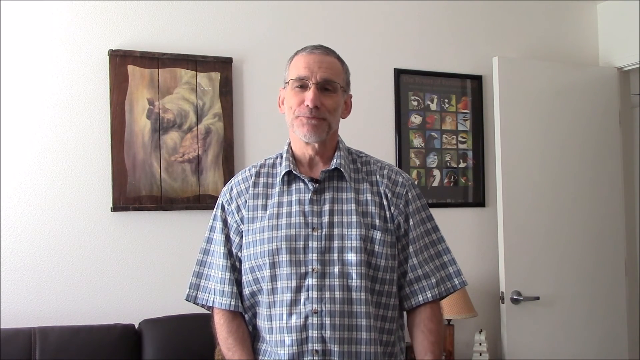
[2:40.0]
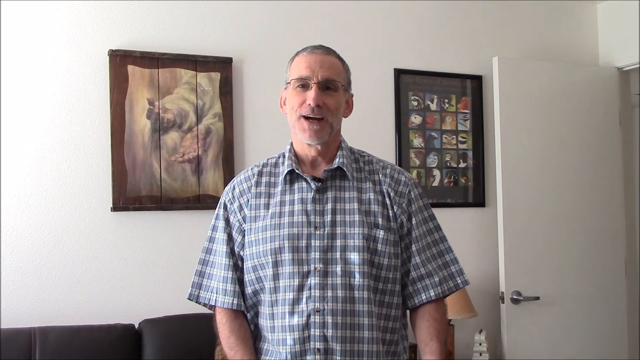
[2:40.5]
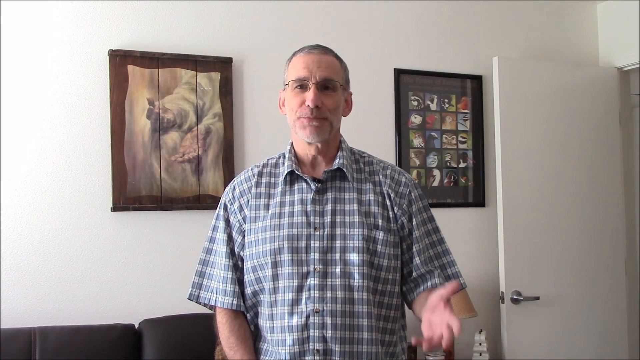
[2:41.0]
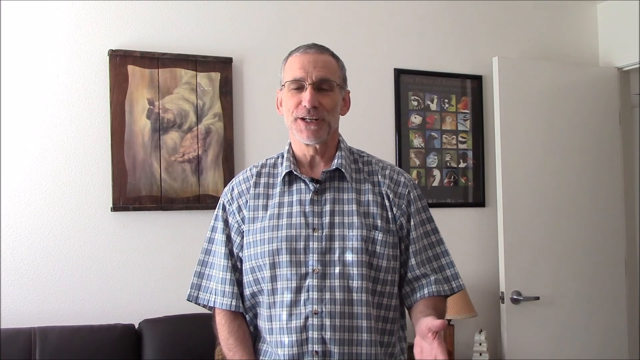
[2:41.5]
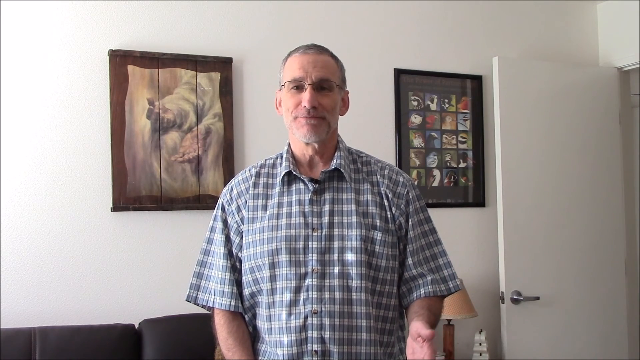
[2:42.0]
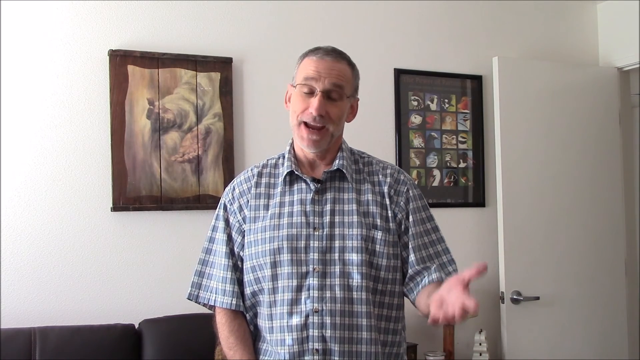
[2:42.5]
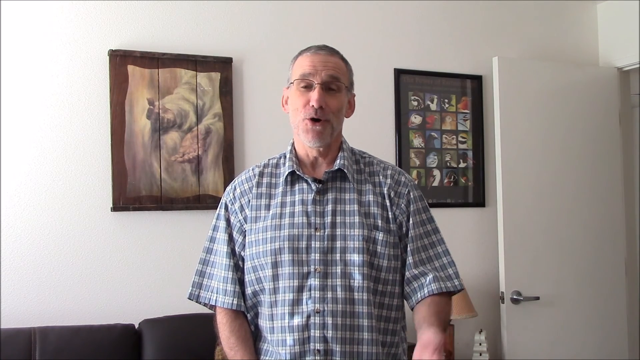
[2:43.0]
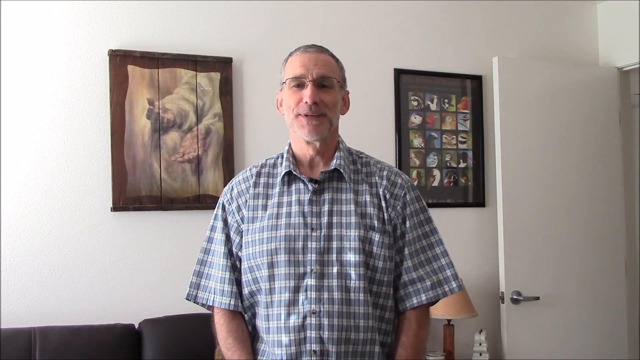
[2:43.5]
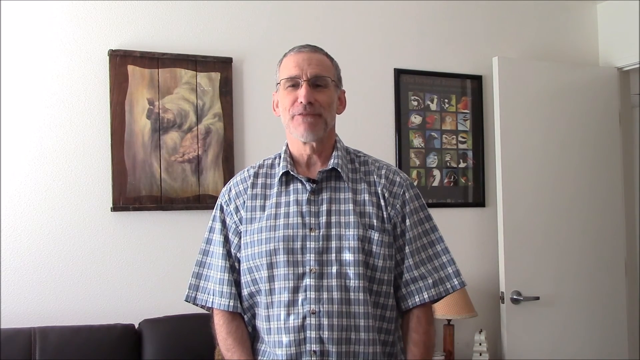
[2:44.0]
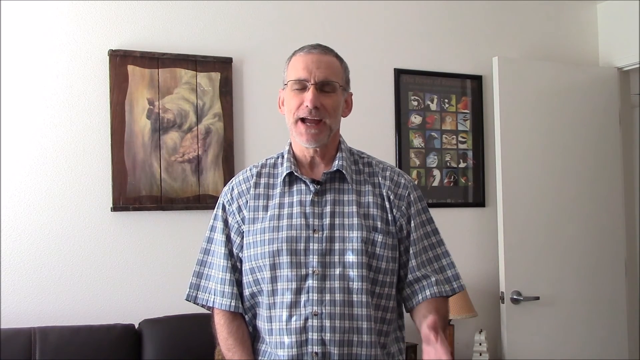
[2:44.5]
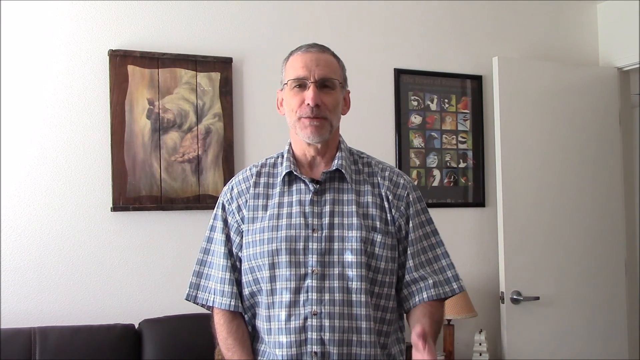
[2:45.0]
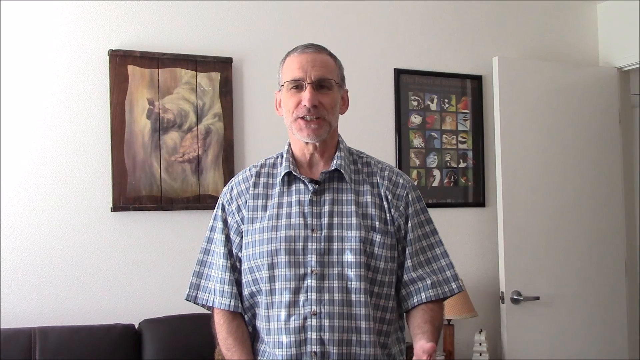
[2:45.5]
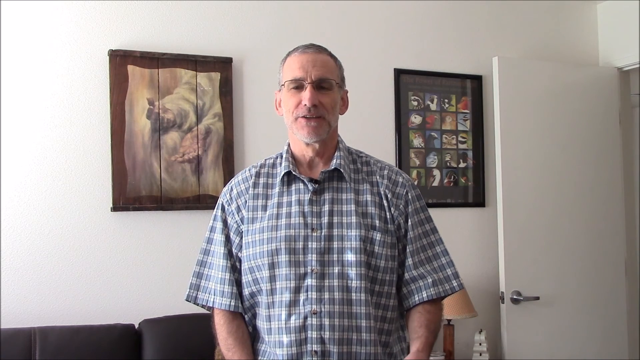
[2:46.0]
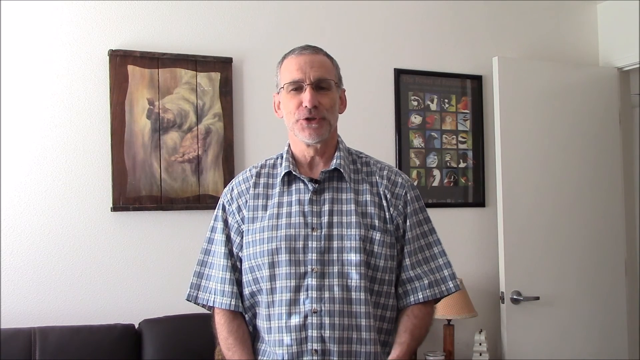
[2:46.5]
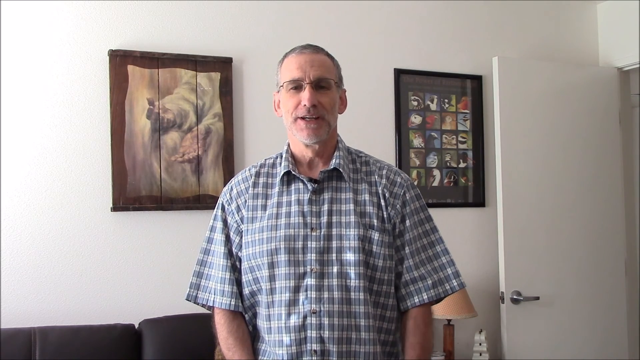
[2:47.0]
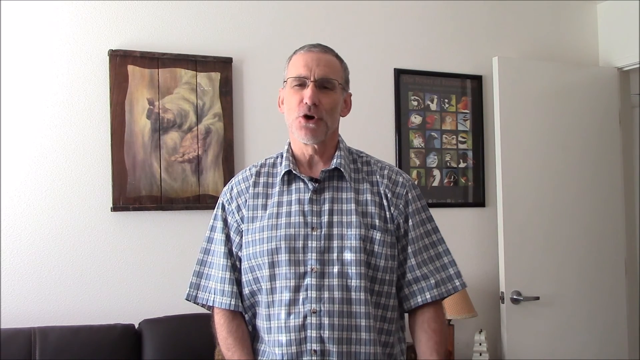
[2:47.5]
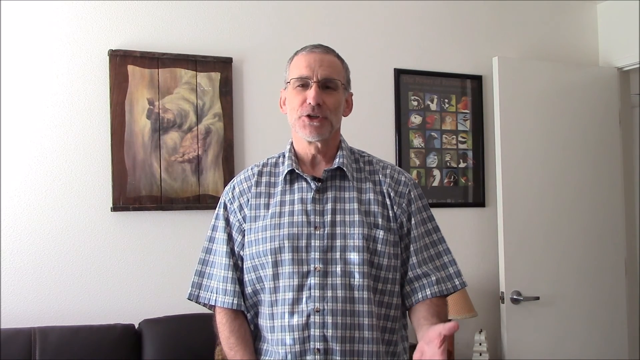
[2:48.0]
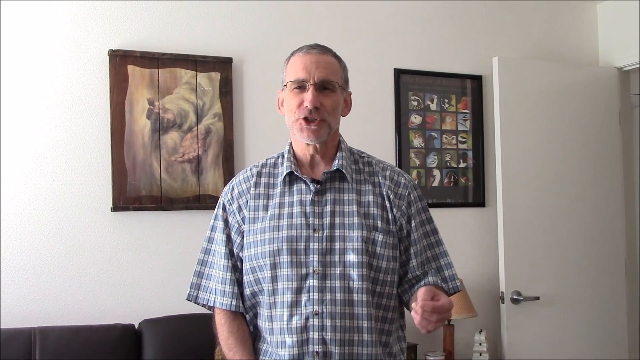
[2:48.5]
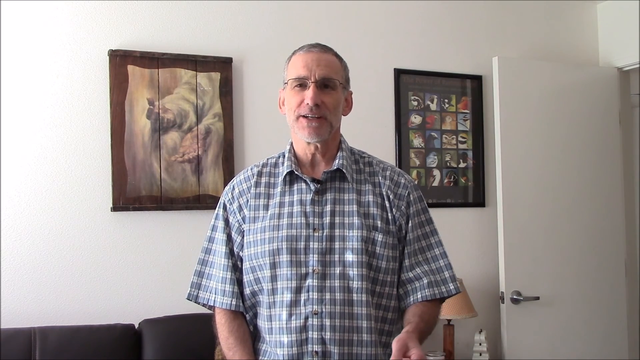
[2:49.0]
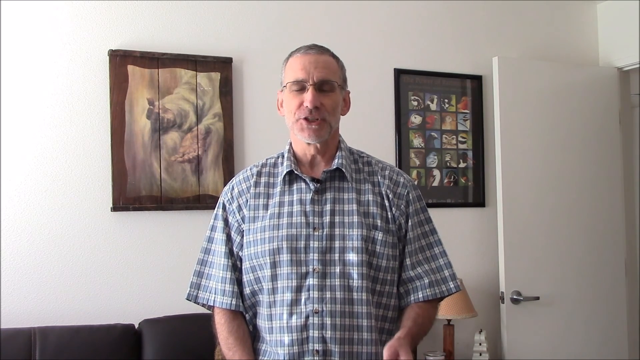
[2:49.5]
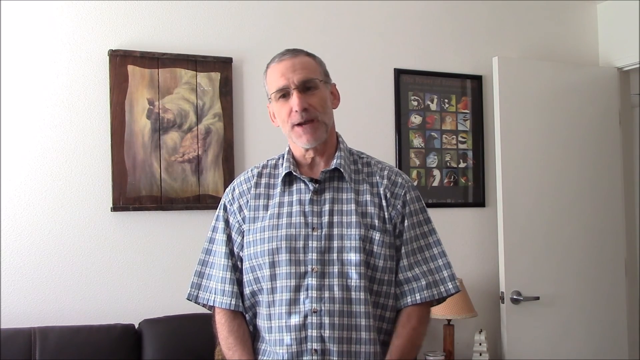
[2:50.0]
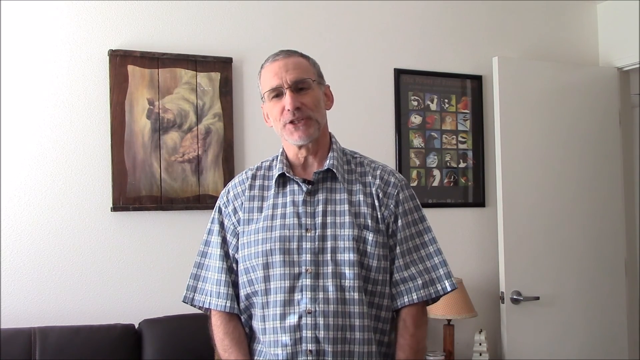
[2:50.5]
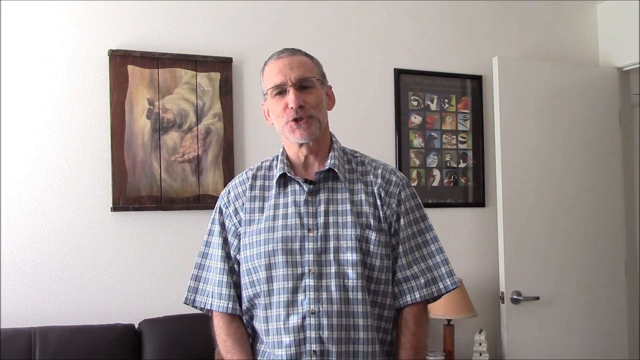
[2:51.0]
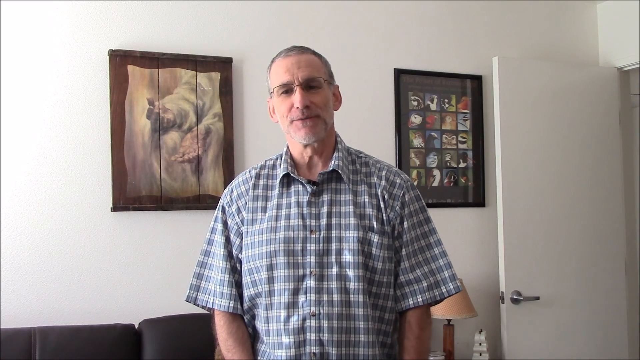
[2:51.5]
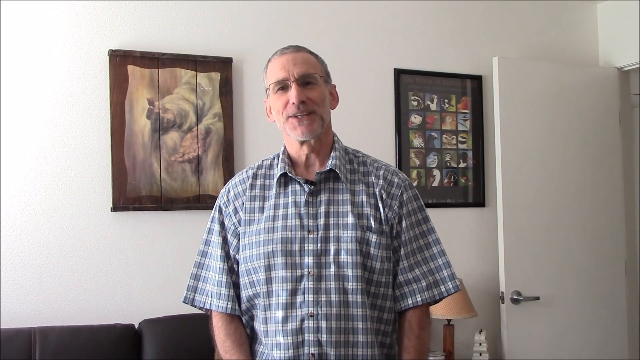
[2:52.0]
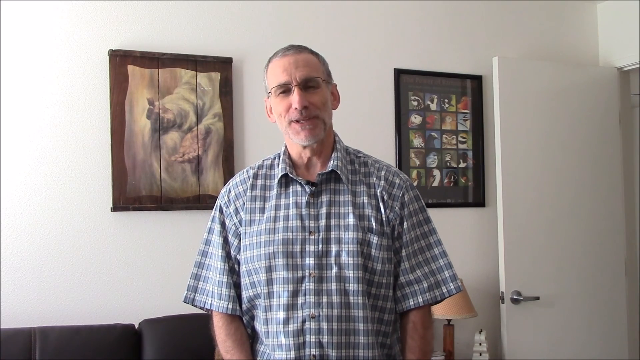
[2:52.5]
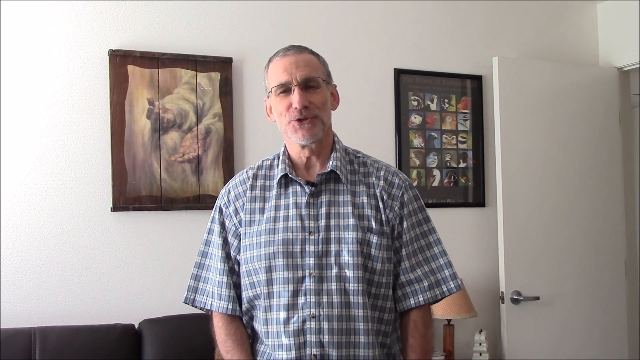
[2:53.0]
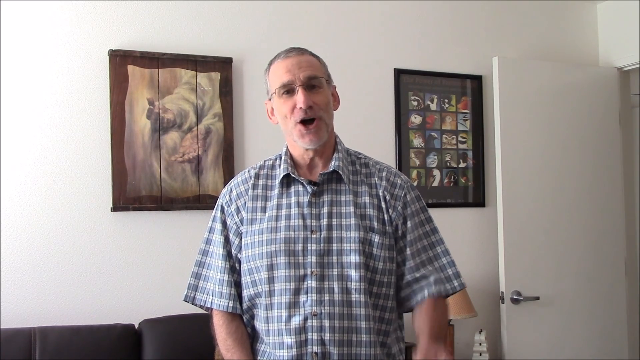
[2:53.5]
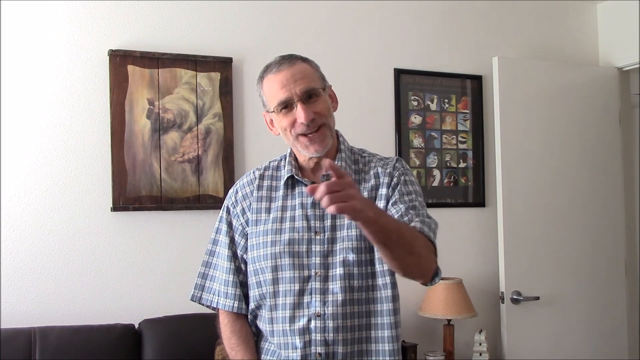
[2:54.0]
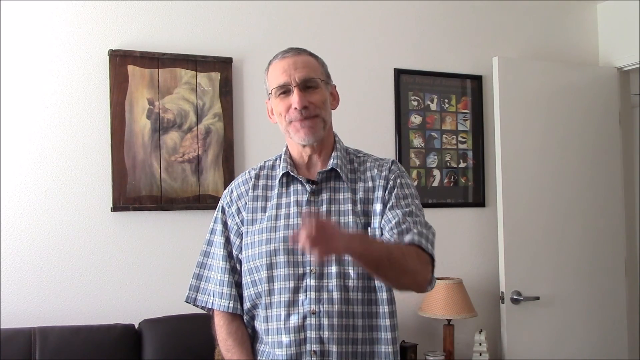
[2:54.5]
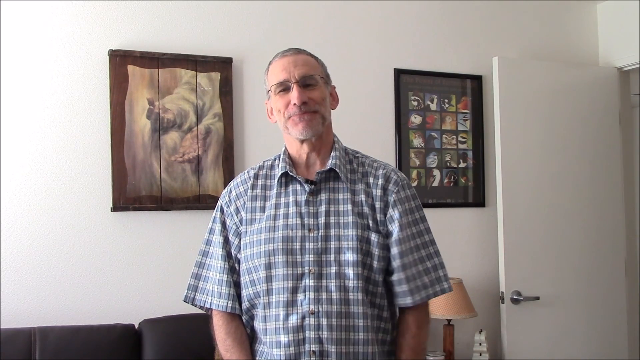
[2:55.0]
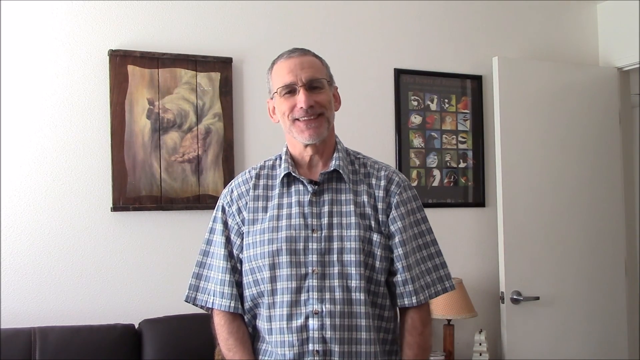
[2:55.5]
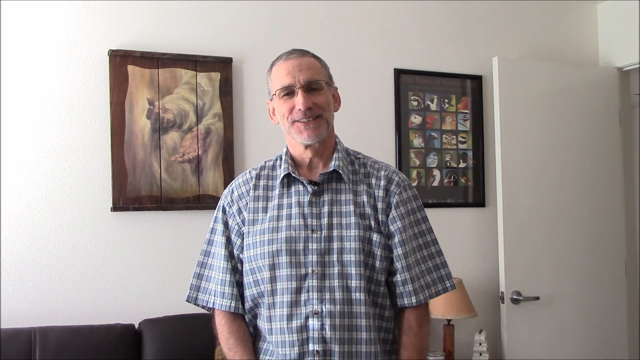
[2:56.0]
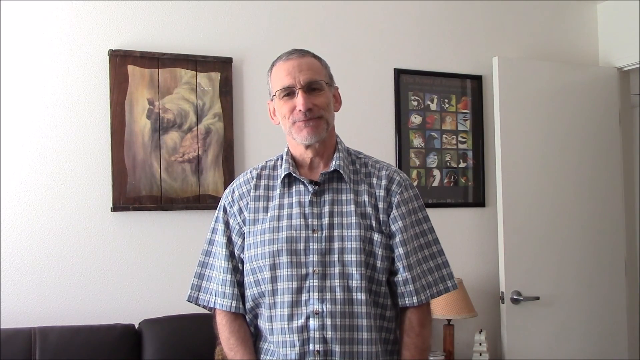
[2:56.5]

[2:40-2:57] The man, who is in his 60s and wears the gray and white collared short-sleeve plaid shirt, still stands in the room with white walls and the black leather couch, between the framed photos. The hand on the left side of the screen is very stiff and not moving, while he gestures as he talks with the hand on the right side of the screen. From his lips, at the beginning he appears to say, "I hope you enjoyed this video." His words in between are hard to make out, but before the end he also appears to say "I hope you subscribe," and at the very end, "God bless, and I'll see you next time." This is most likely from a YouTube channel.